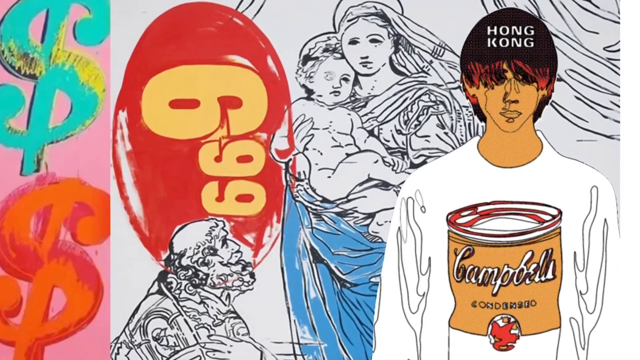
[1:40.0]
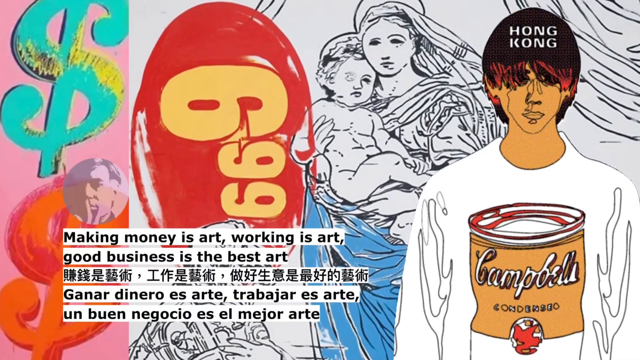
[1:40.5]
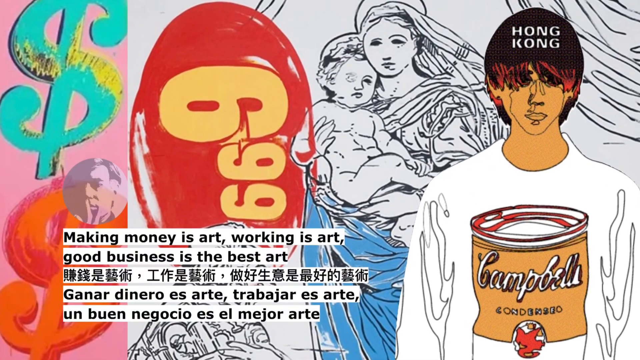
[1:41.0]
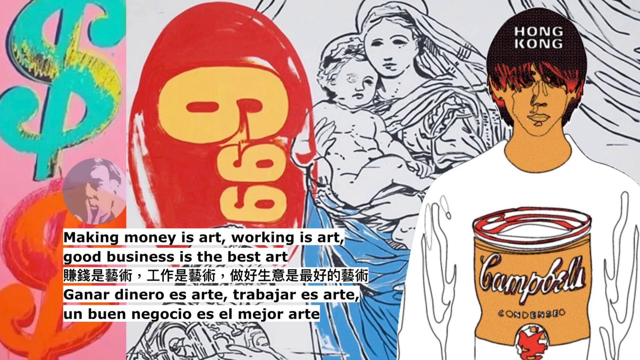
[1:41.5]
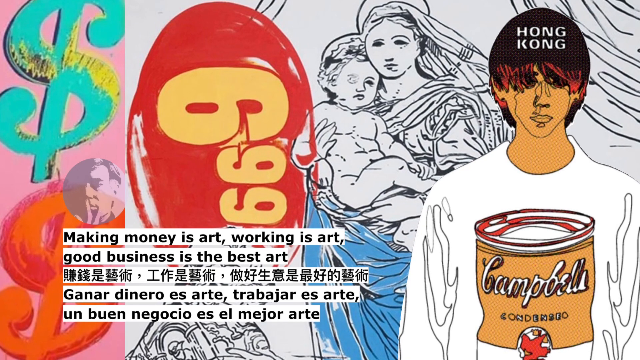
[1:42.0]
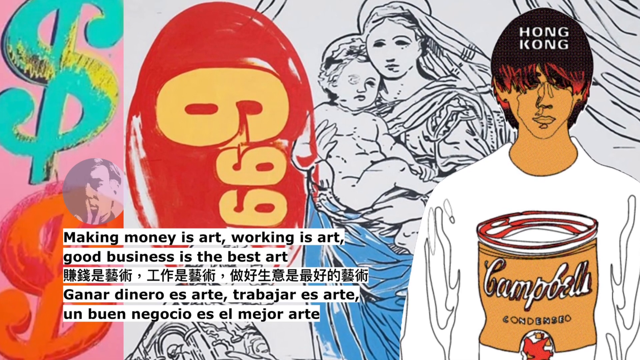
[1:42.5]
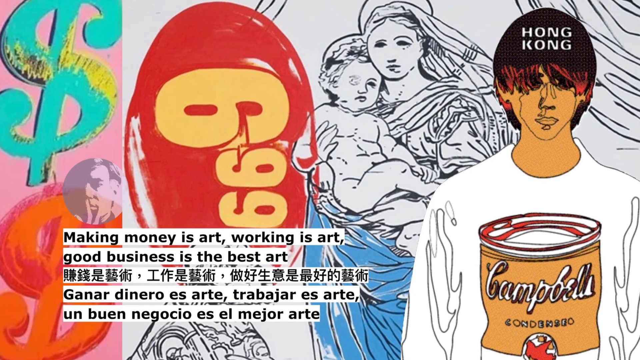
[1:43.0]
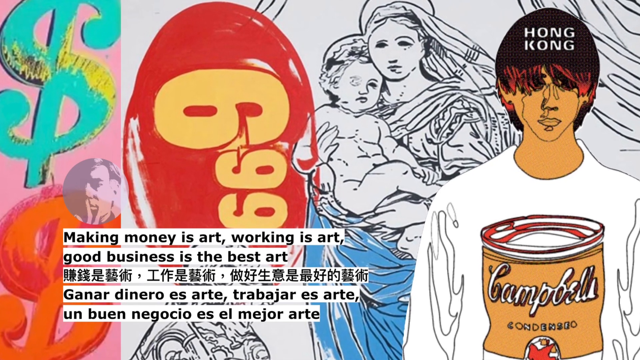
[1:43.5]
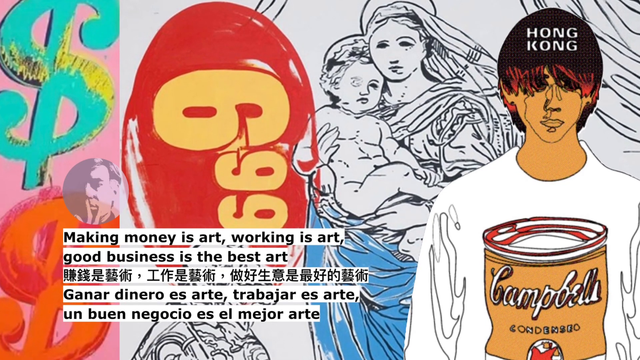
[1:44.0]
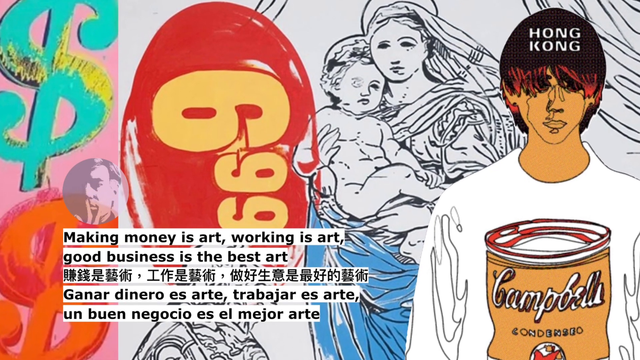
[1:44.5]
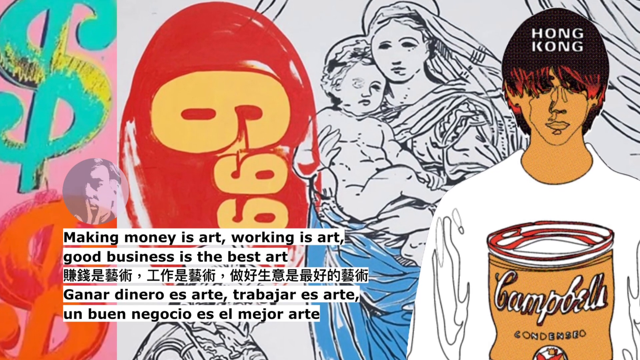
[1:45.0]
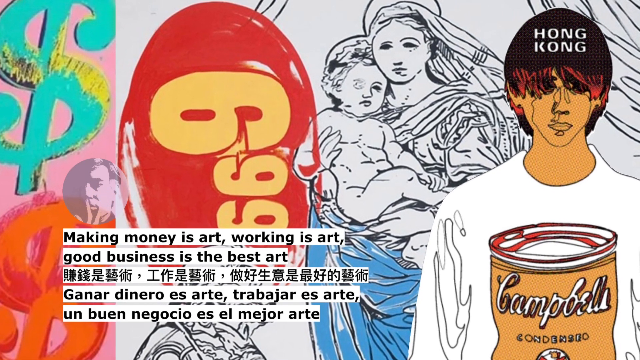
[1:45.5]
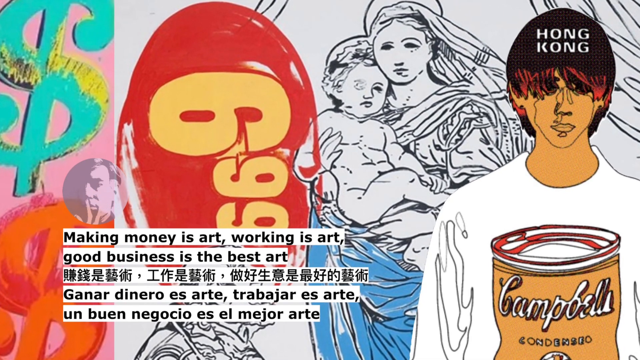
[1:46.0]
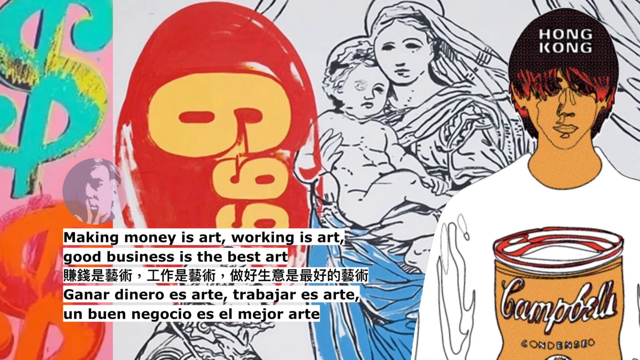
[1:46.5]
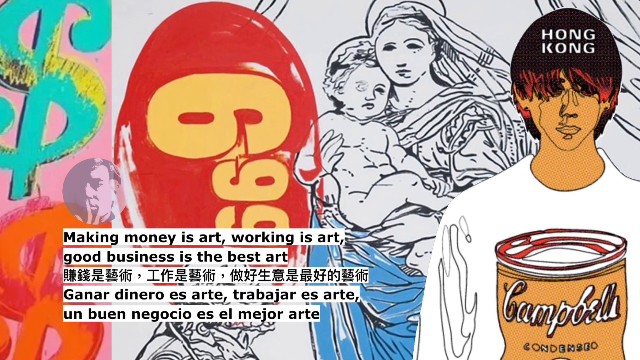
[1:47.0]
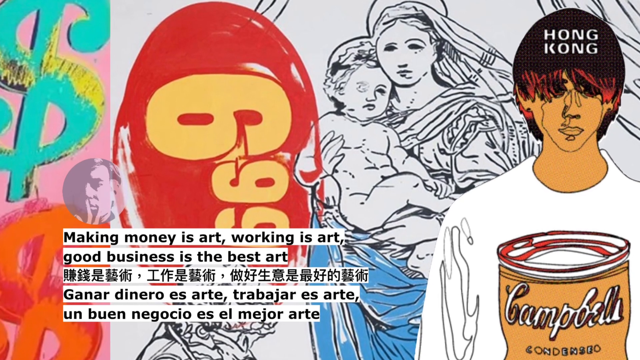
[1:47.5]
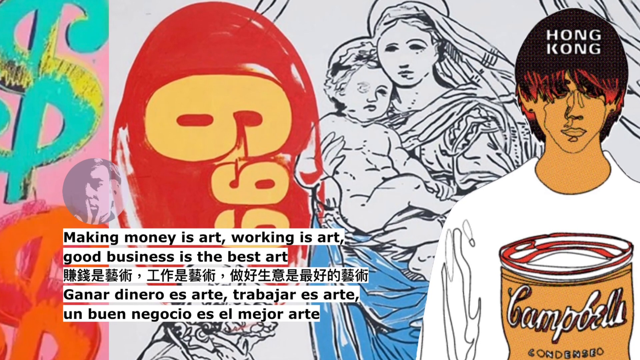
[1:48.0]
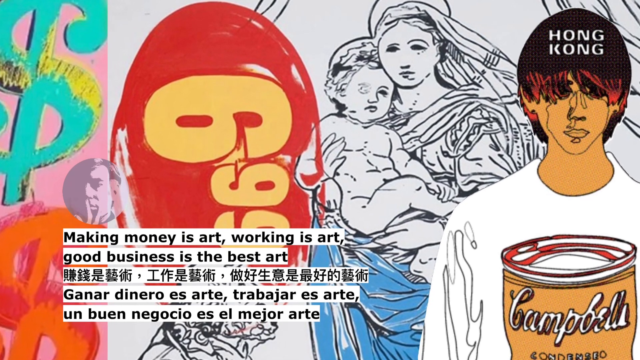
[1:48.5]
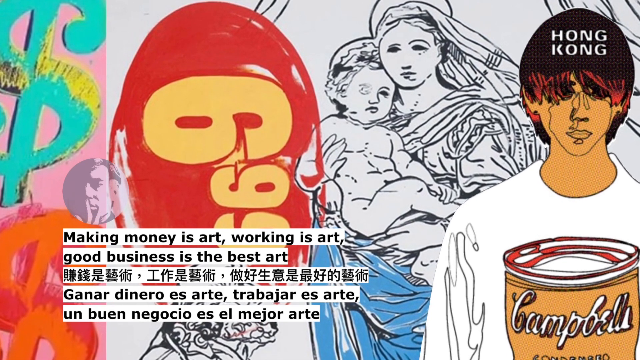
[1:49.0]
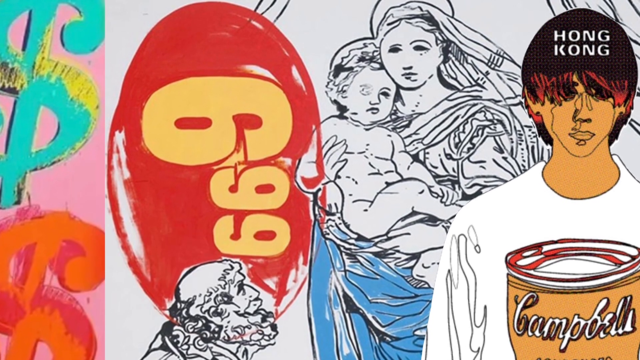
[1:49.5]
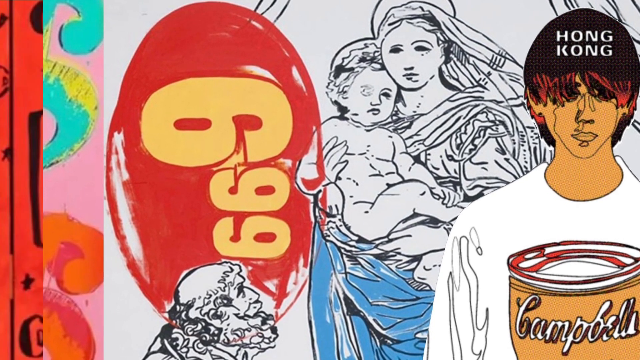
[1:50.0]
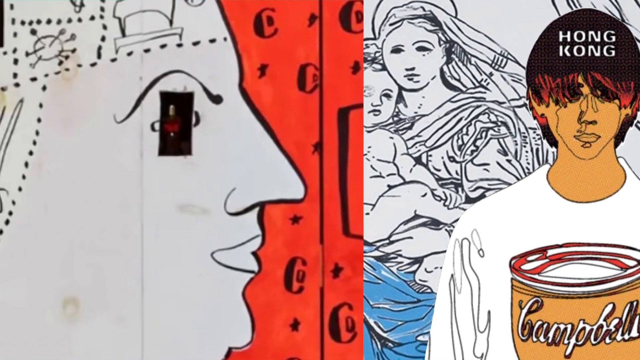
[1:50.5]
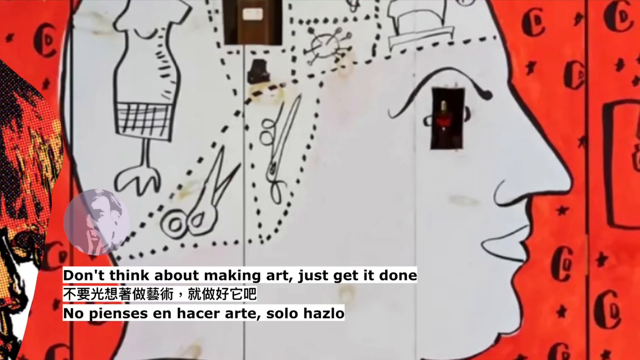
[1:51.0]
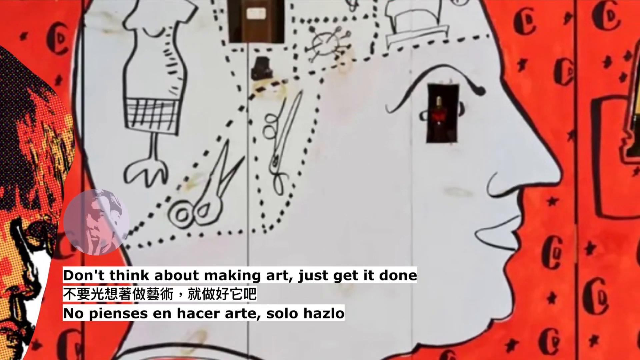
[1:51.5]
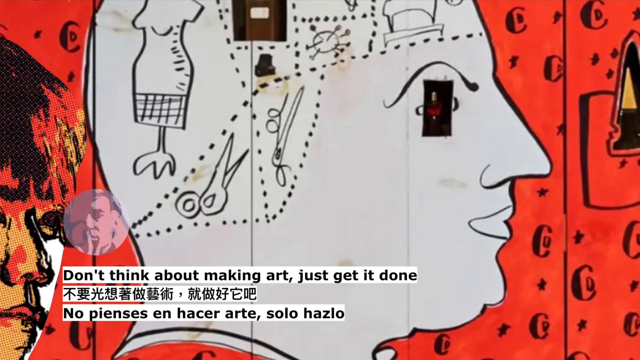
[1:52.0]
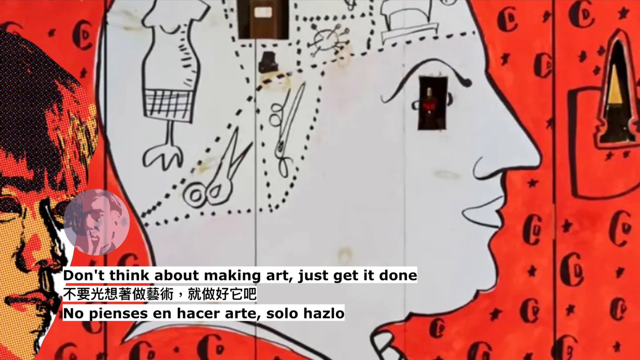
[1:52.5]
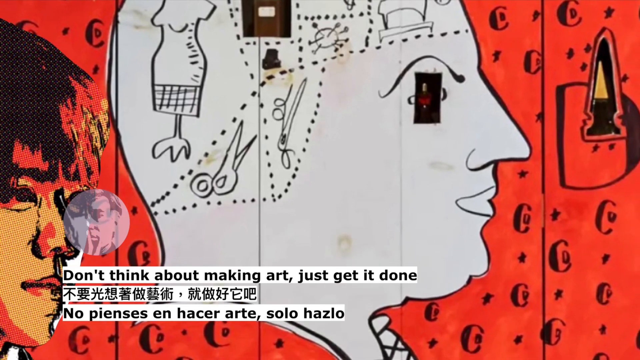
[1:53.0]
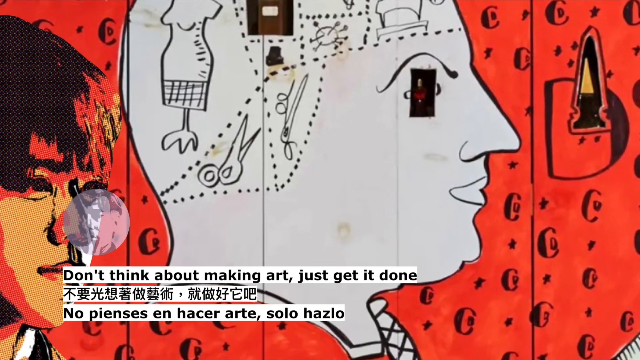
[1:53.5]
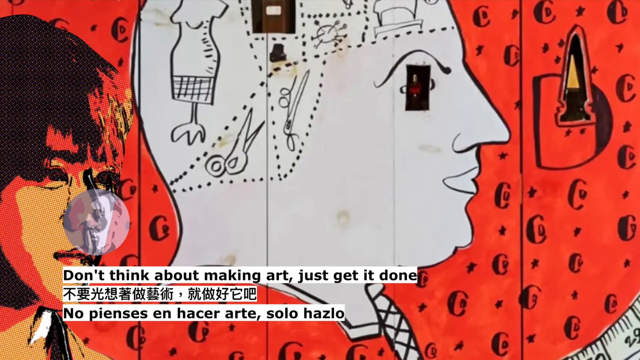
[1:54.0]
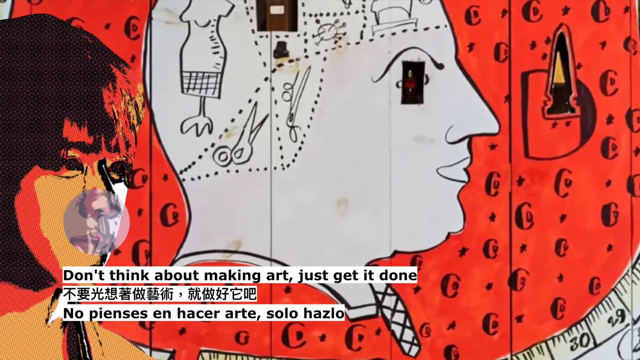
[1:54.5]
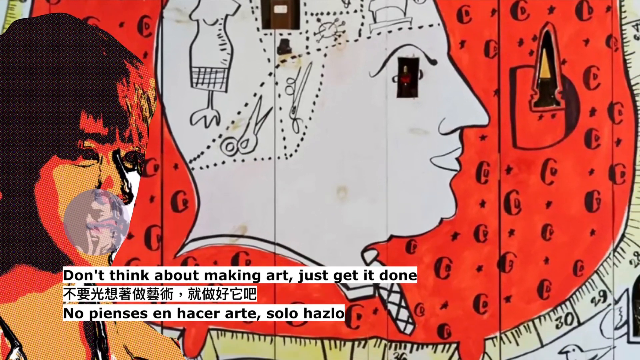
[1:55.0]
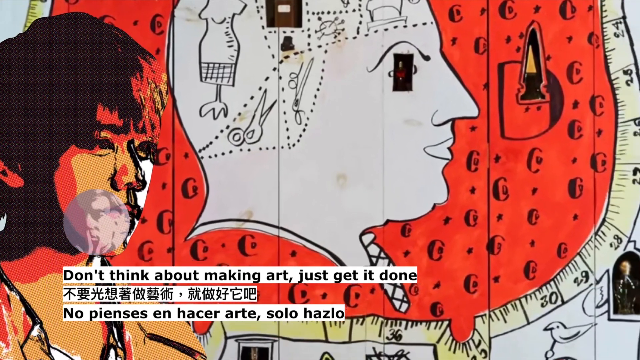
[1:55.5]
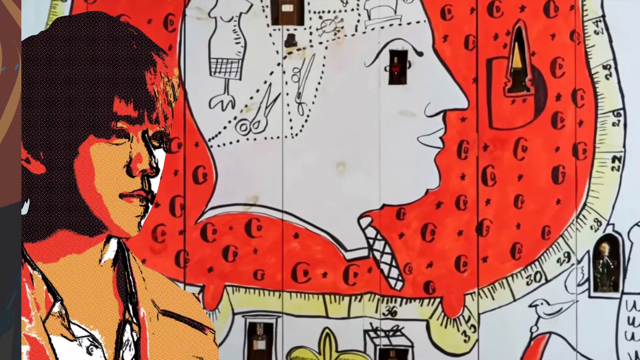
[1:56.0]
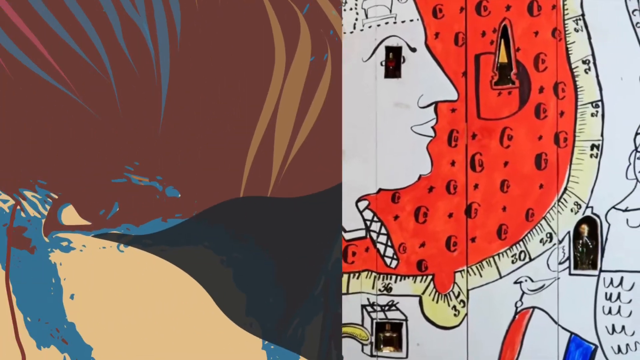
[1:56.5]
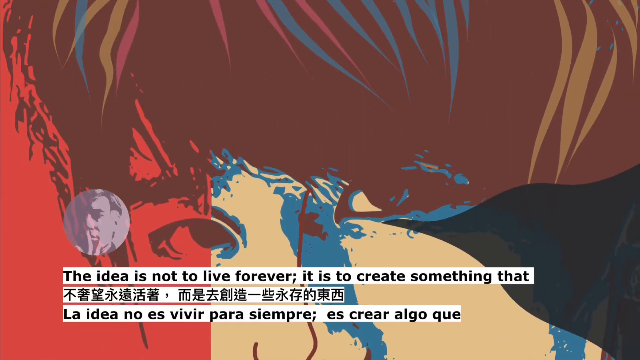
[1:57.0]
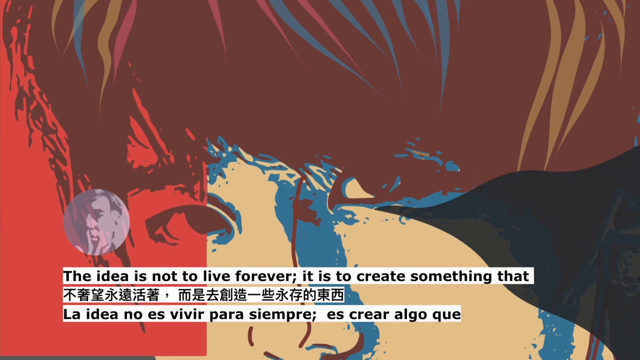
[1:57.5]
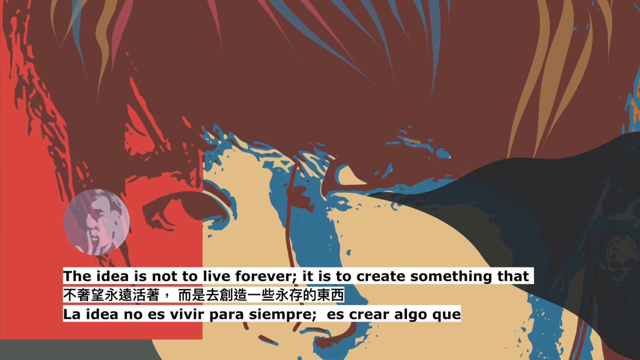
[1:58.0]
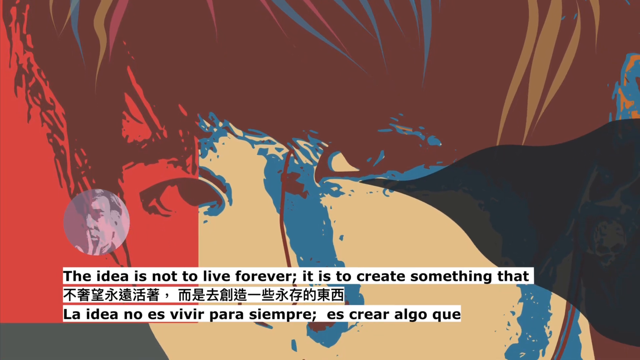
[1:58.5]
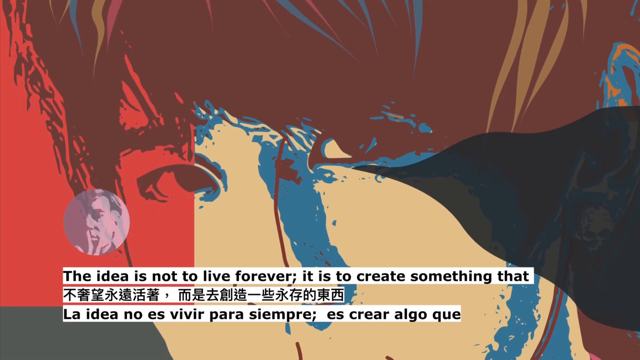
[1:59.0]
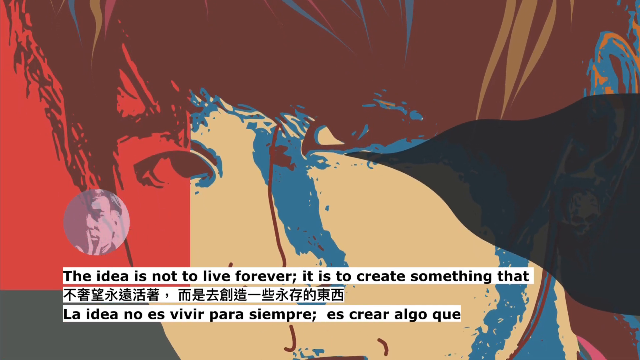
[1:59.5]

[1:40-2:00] An image shows a white outline shirt of the Asian artist on the right side, with black hair, white lettering reading "Hong Kong", reddish bangs coming down over the black eyes, nose and mouth, and light brown skin. There is a black and white outline image of a woman holding a baby with a blue cloth underneath, and a black and white outline of an older man with a beard who seems to be kneeling below. A red bubble holds the yellow numbers "699". On an orange background, white lettering reads "Campbell's", with a red marking and a black outline of a soup can. To the far left, on a pink background, is a teal and yellow dollar sign, and below that an orange and reddish dollar sign. Black lettering appears on a white background reading "making money is art, working is art, good business is the best art", with the same wording in two different languages below. On the left, a gray image of the artist with their hands by their mouth is in a circle. The picture changes to an orange background with black C's, and black lettering on a white background at the bottom reads "don't think about making art, just get it done", with the same sentence in the same coloration on two lines below. A grayish purple outline of the artist is in a circle on the left side. In the center is a black outline, white on the inside, of the side view of someone's face showing the nose, mouth, eyes and eyebrows, with a black square over the eye. A pair of scissors surrounded by dots is off to the left, an outline of a mannequin on a chair stand is on the left, and a circle with pin cushions in it is just to the right of that. The Asian artist is visible just behind, with black hair, orange in the front, a yellow nose and a black outline of the face, and the same artist appears again with blue, yellow and pink streams going over his black hair, an orange square on the left covering his black eyes, yellow and blue over the nose and face, and grayish black on the left side. The black wording below on a white background reads "the idea is not to live forever, it is to create something that".